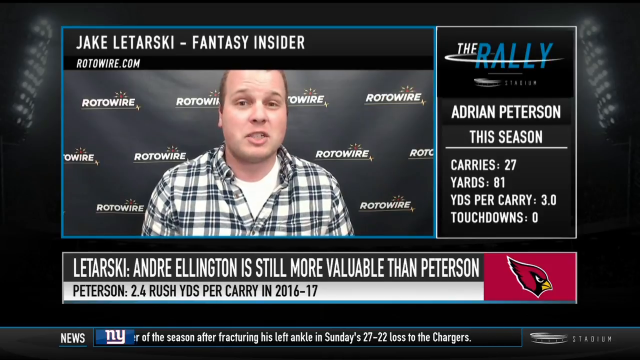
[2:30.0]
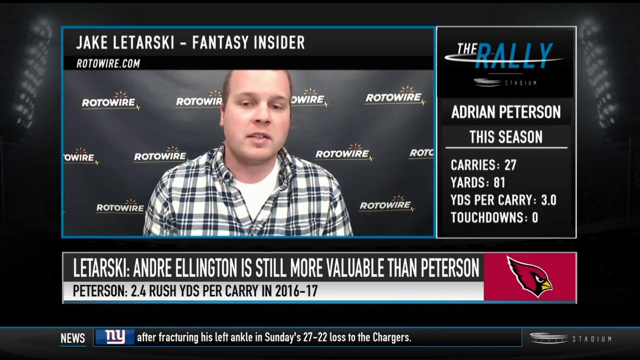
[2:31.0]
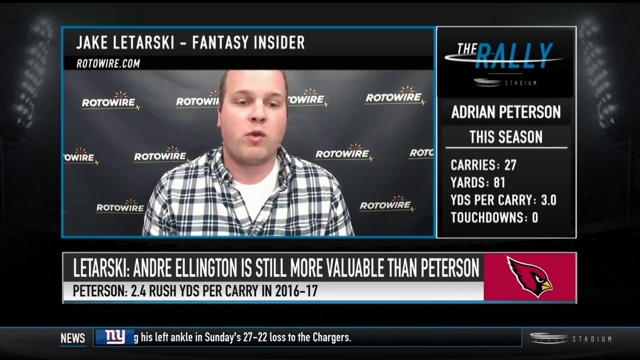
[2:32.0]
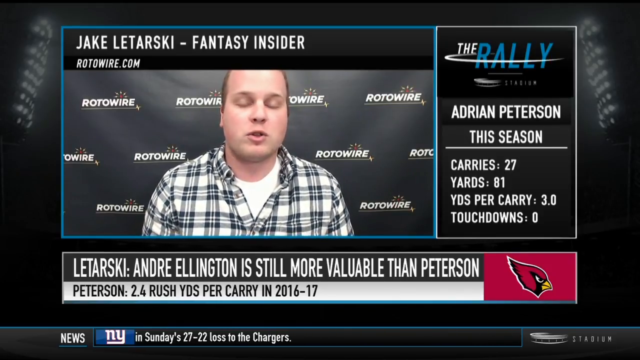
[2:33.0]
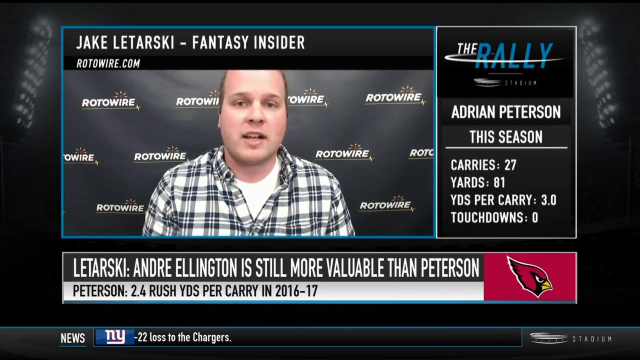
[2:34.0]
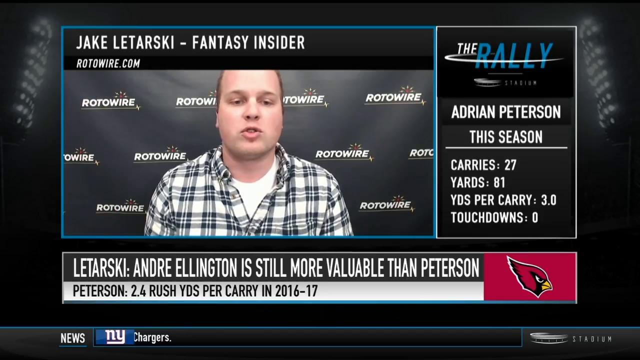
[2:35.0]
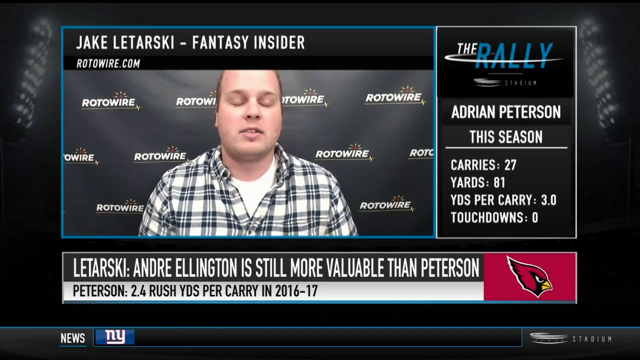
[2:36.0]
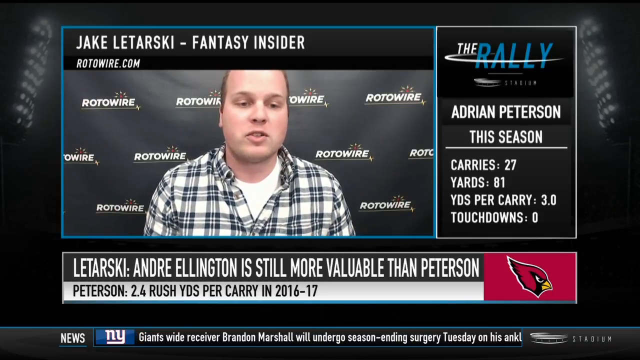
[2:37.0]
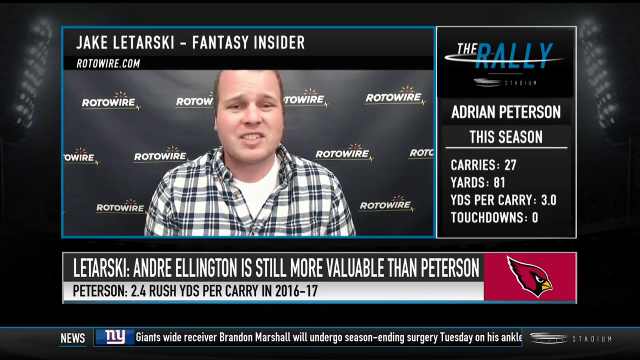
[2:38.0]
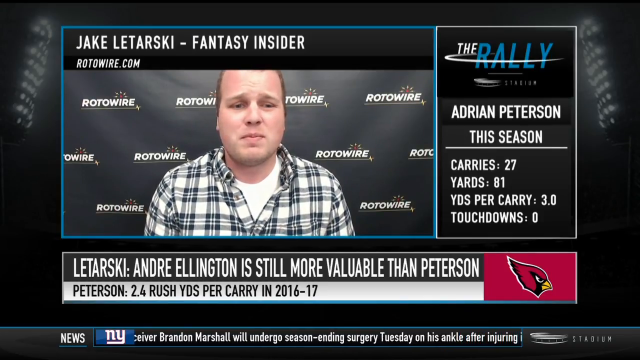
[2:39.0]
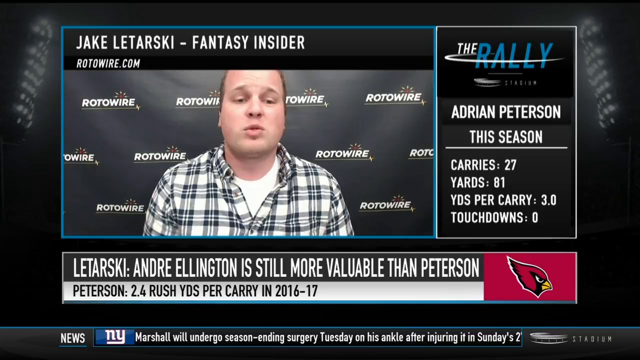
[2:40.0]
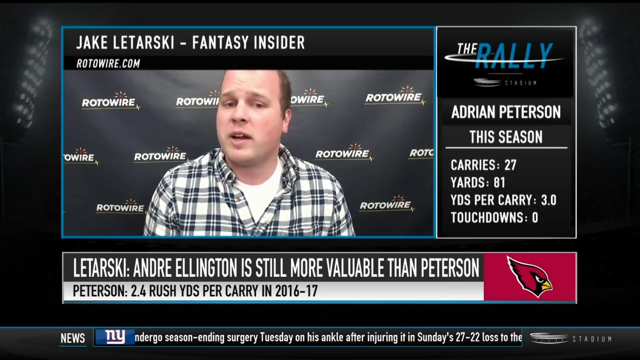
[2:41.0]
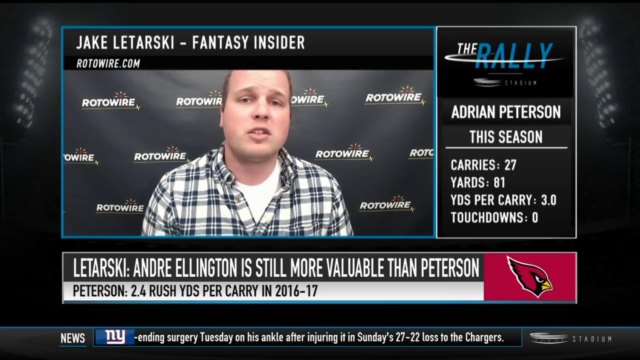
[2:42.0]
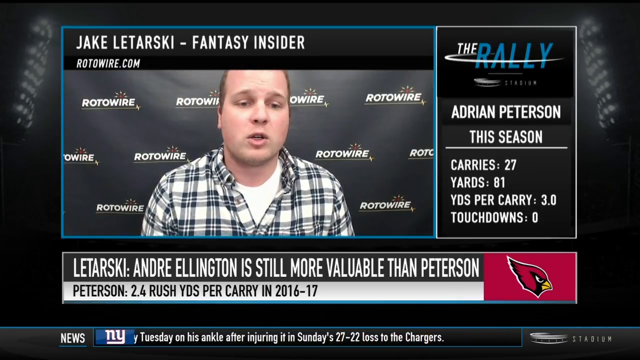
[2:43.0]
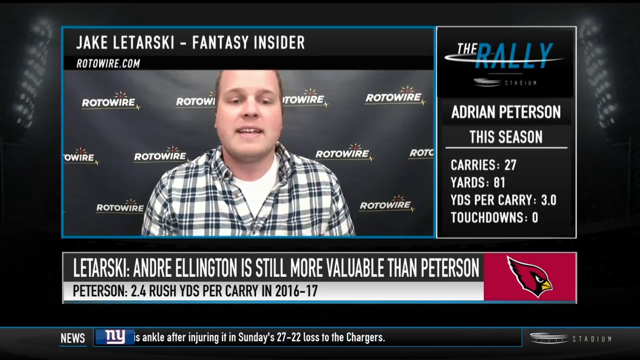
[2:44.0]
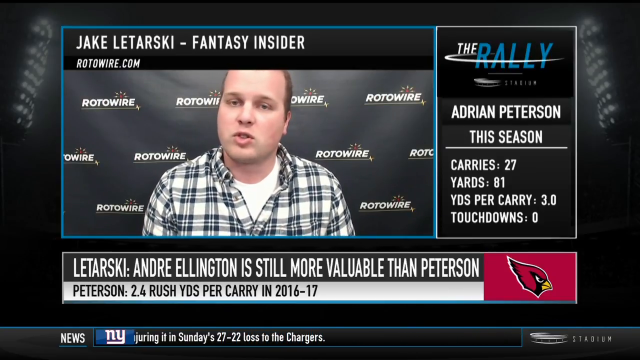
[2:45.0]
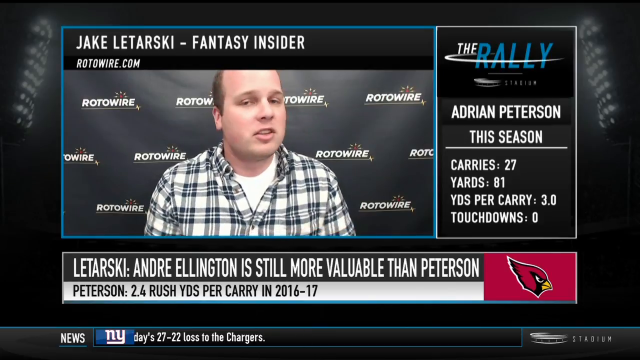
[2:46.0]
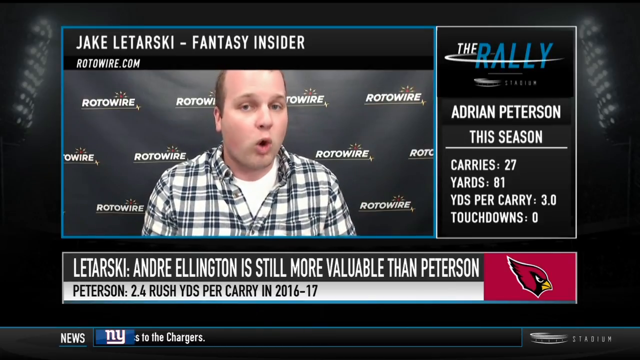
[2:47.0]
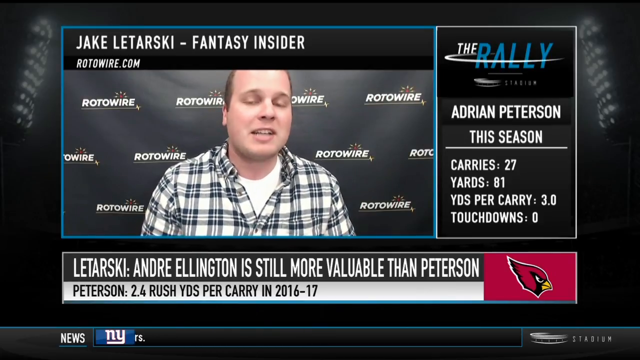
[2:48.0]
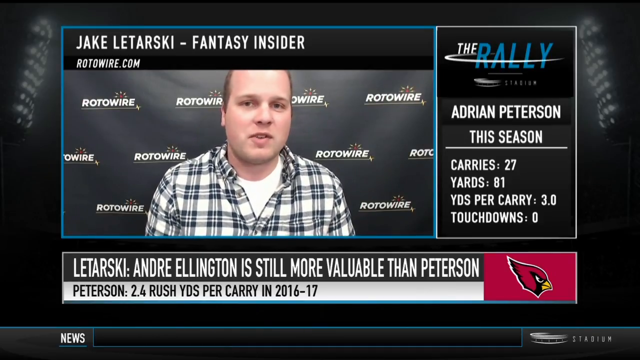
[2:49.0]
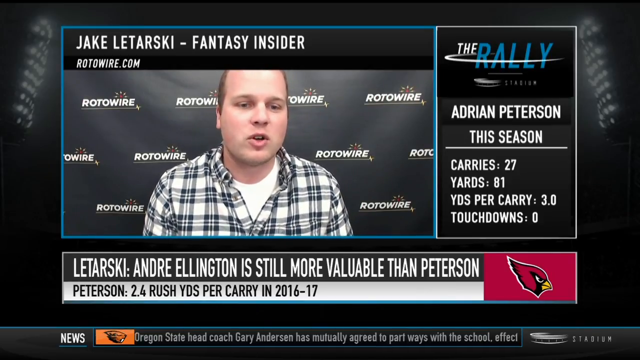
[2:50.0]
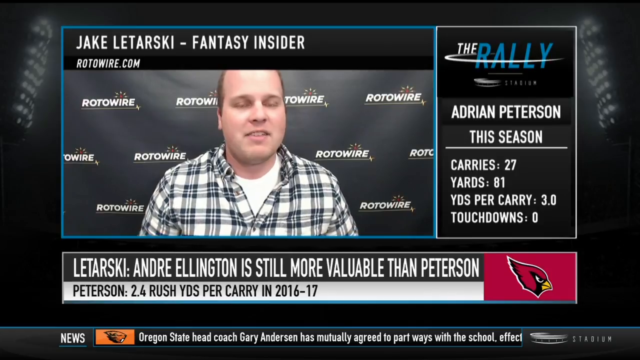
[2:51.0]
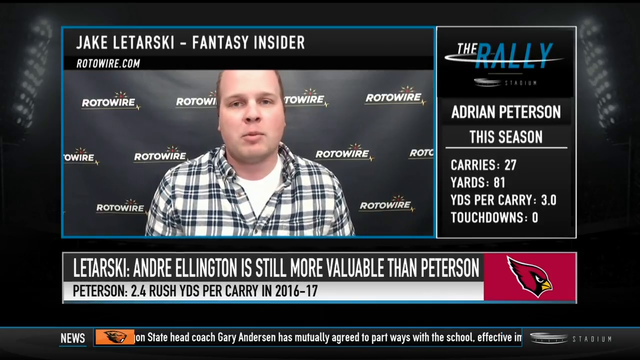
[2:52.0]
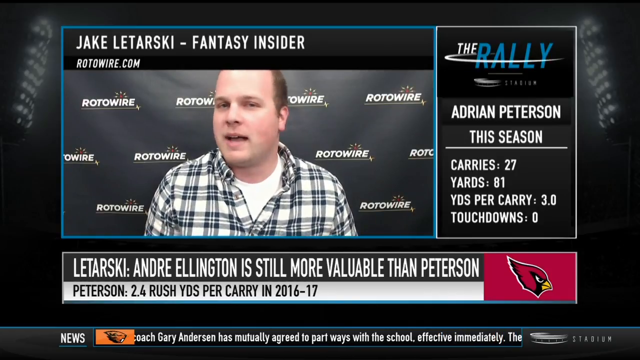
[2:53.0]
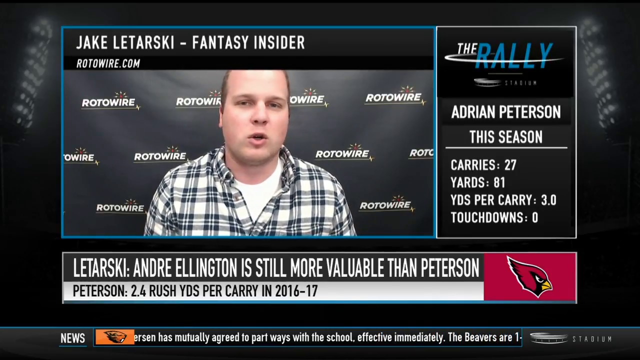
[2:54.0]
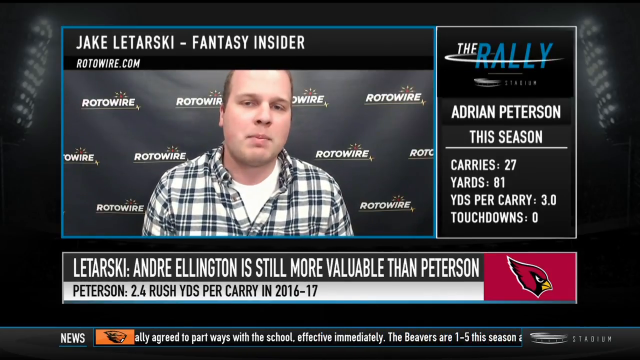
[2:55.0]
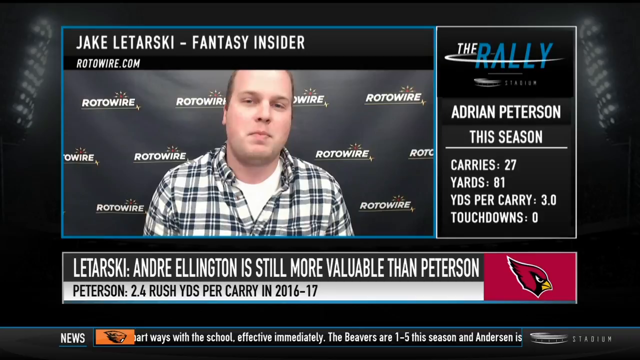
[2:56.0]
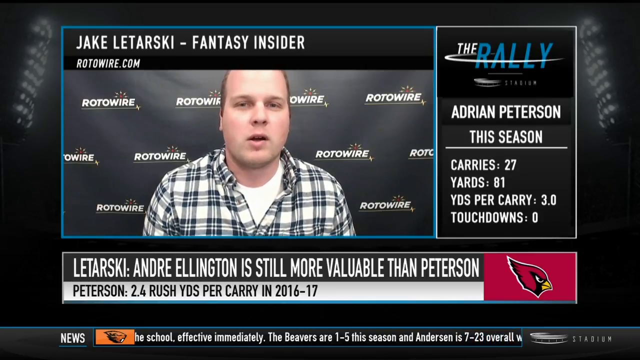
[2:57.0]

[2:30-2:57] Jake Letarsky, the Fantasy Insider, continues talking through the rest of the video, with the sports news ticker still scrolling across the bottom. In the upper right, "The Rally" appears with "Rally" in blue and "The" in white, and a little swoosh line comes out from the back of "Rally" and goes across its front. All of this is against a black background with what looks like faded stadium lights. The Cardinals logo is on the right of the black and gray text boxes at the bottom. His graphic, with the black banner on top and his video, is outlined in a bright blue, the same blue as the word "Rally." The stats remain below the Rally logo.